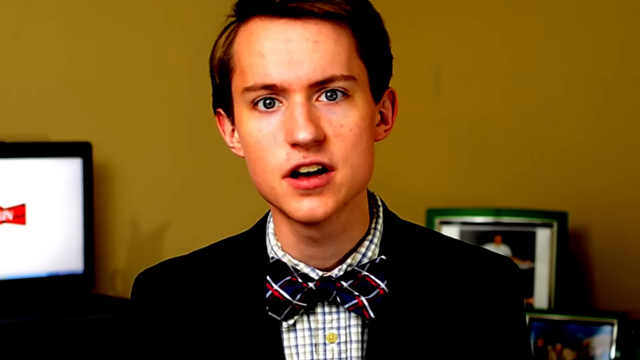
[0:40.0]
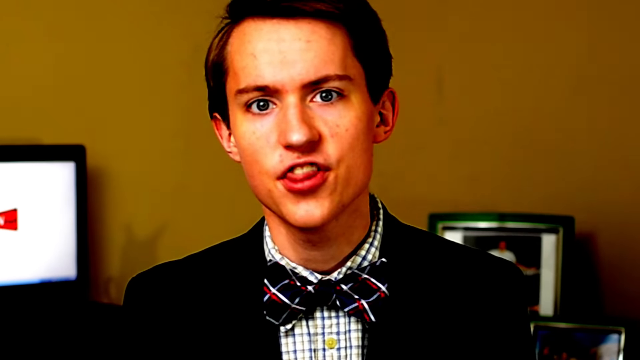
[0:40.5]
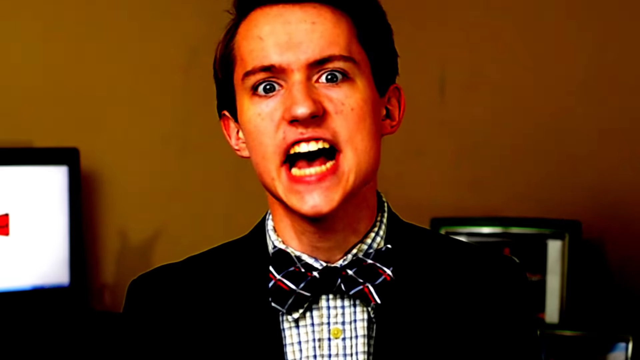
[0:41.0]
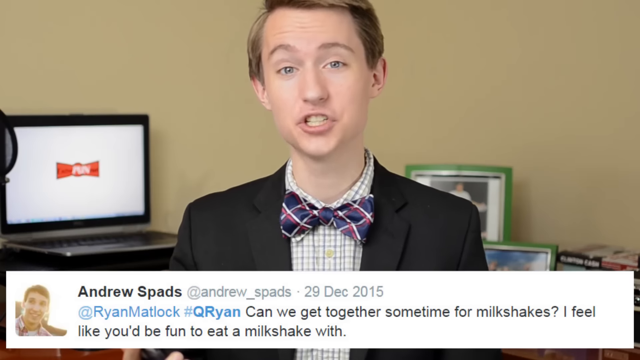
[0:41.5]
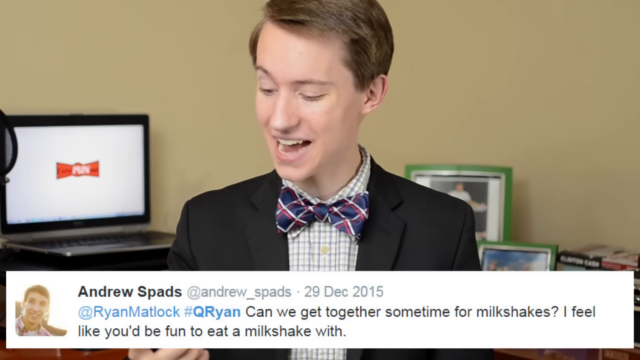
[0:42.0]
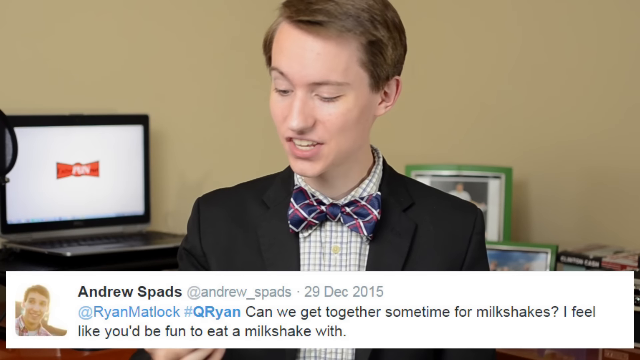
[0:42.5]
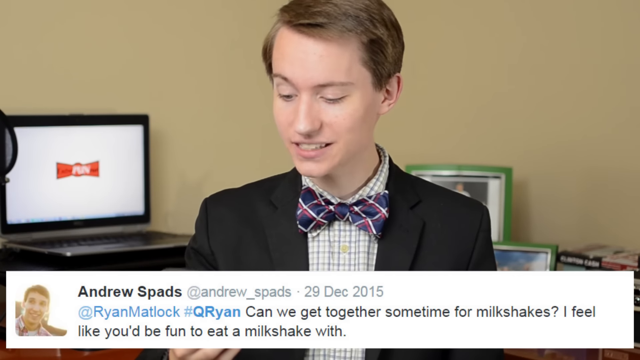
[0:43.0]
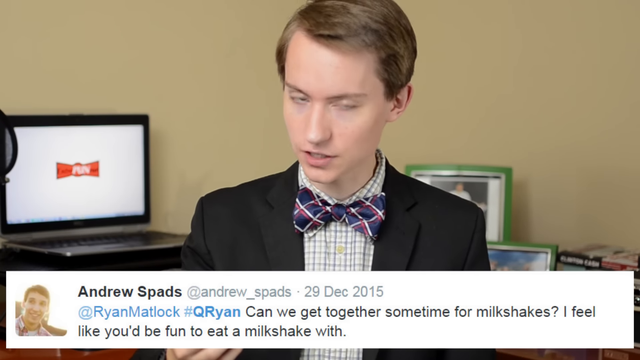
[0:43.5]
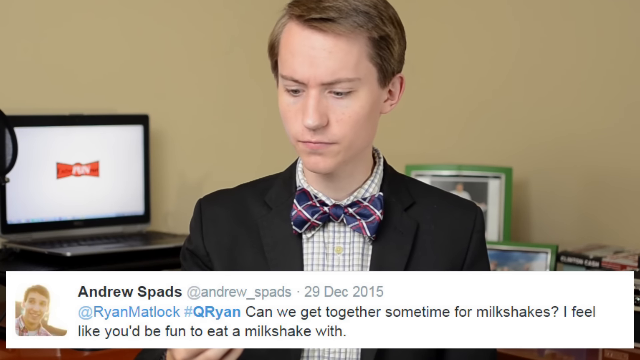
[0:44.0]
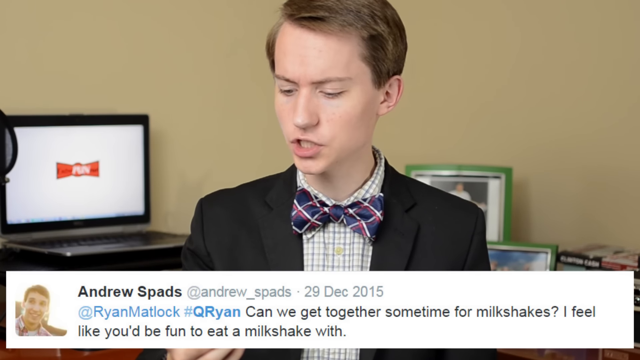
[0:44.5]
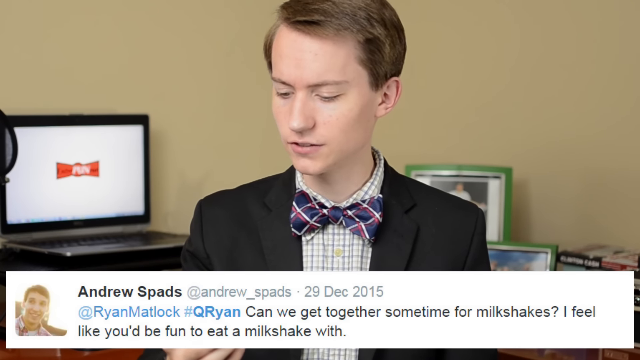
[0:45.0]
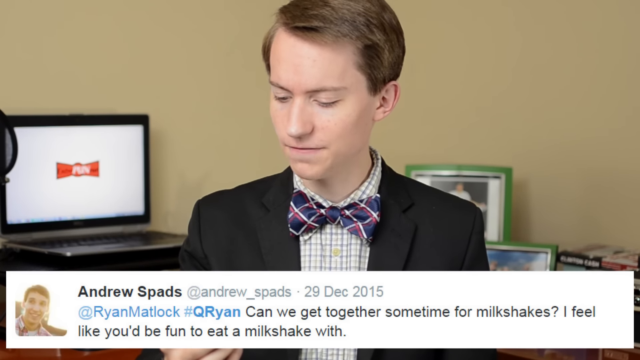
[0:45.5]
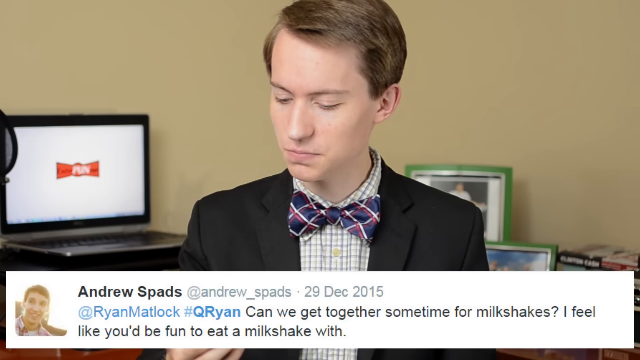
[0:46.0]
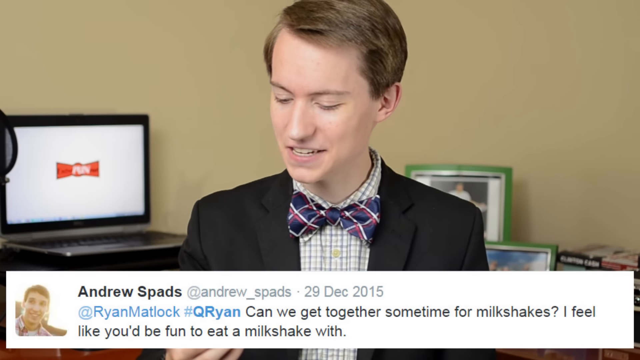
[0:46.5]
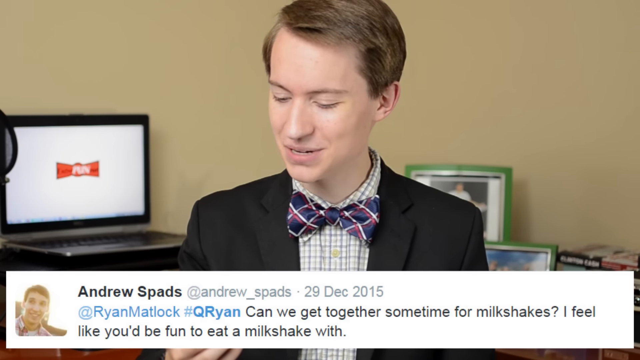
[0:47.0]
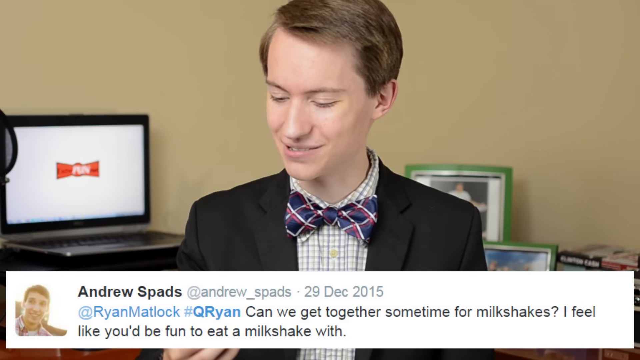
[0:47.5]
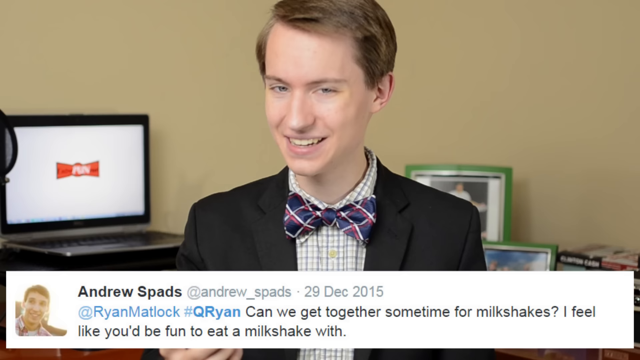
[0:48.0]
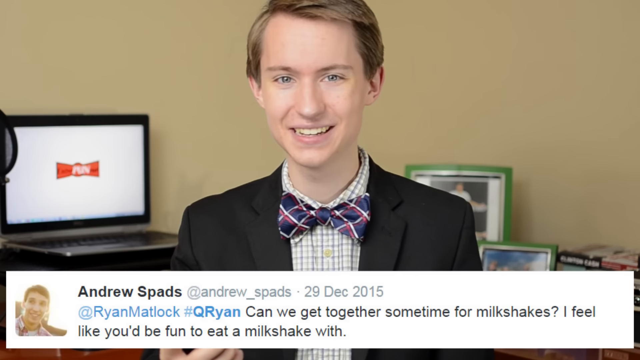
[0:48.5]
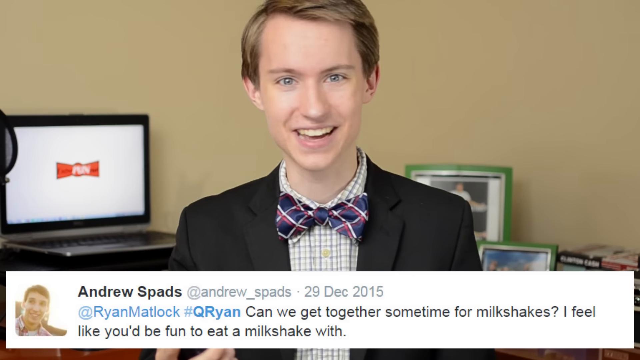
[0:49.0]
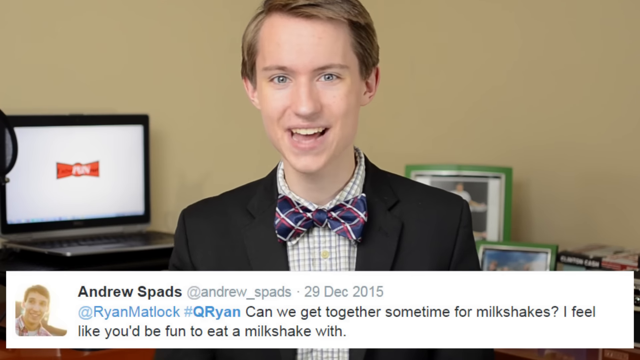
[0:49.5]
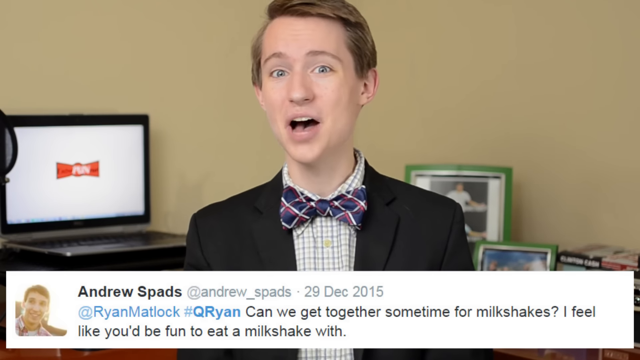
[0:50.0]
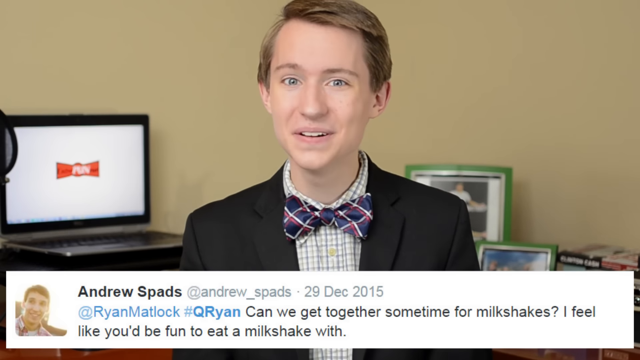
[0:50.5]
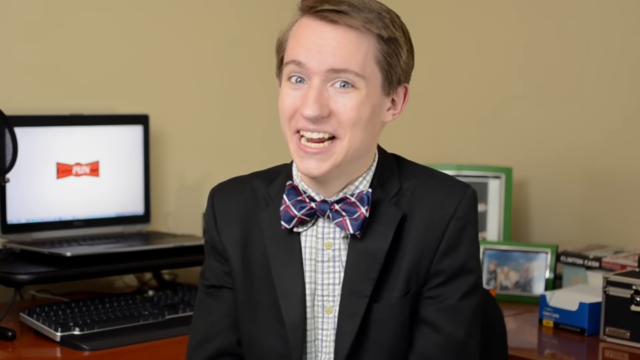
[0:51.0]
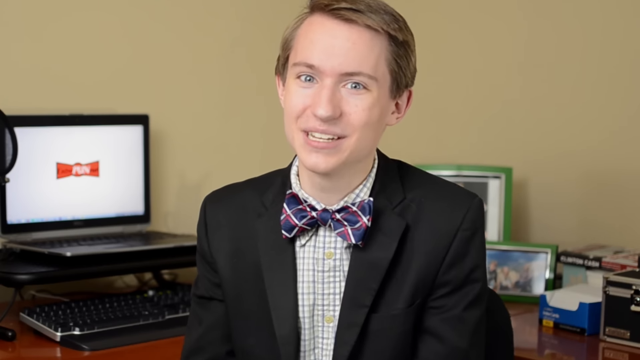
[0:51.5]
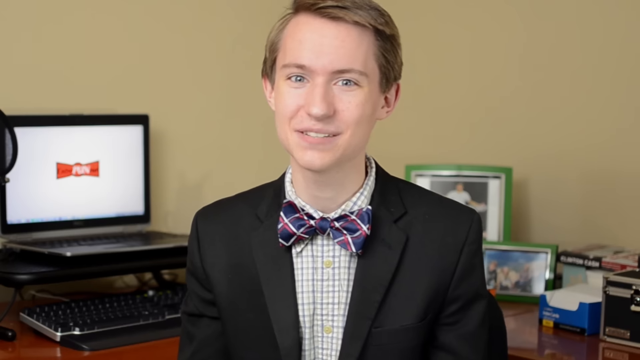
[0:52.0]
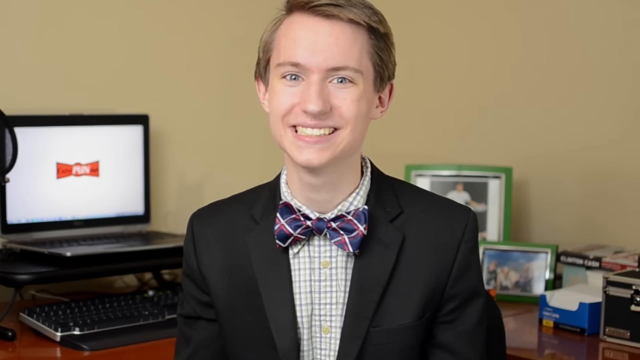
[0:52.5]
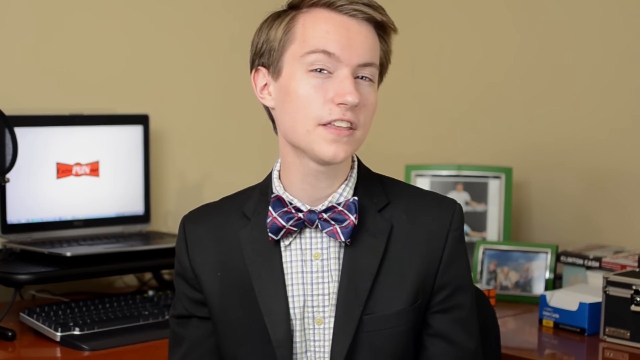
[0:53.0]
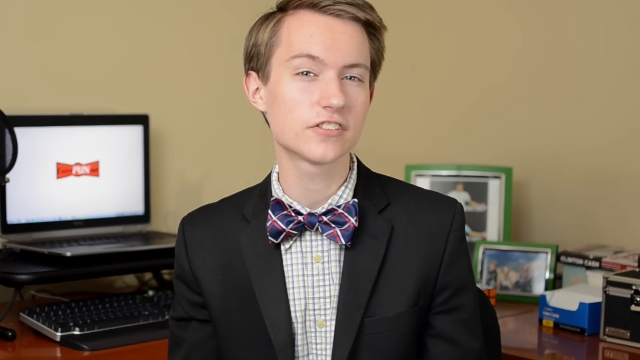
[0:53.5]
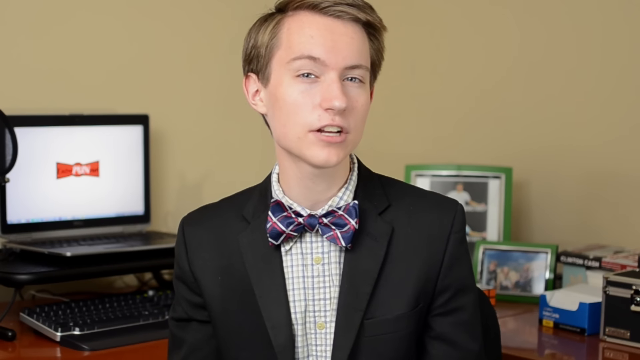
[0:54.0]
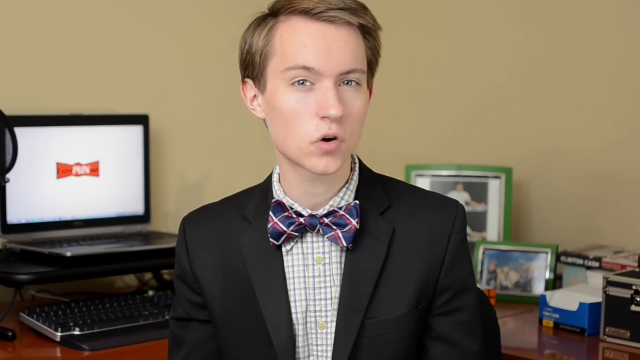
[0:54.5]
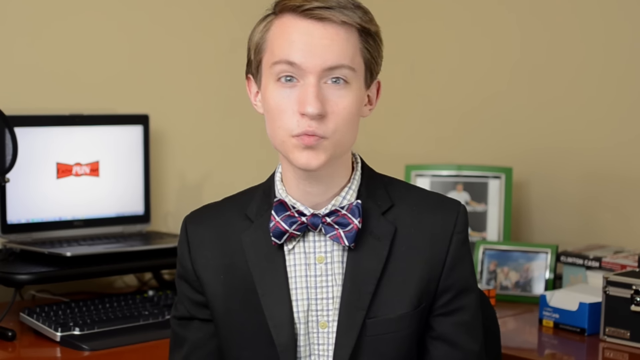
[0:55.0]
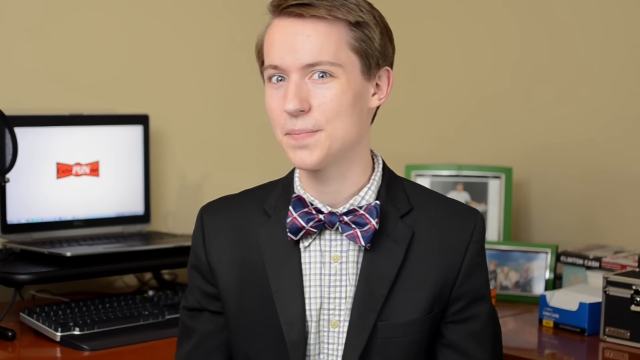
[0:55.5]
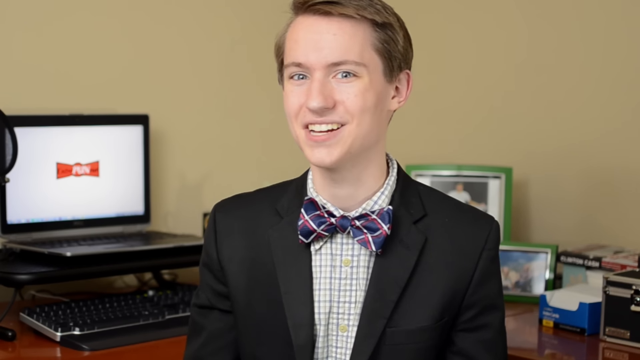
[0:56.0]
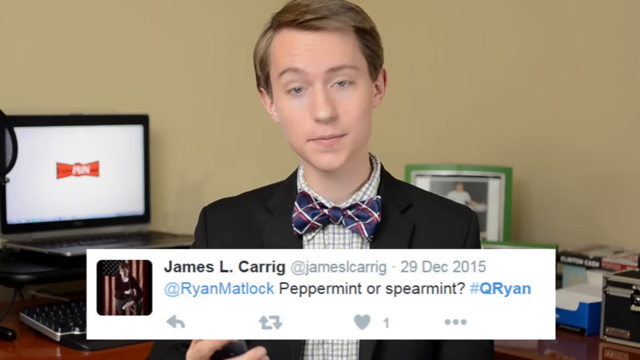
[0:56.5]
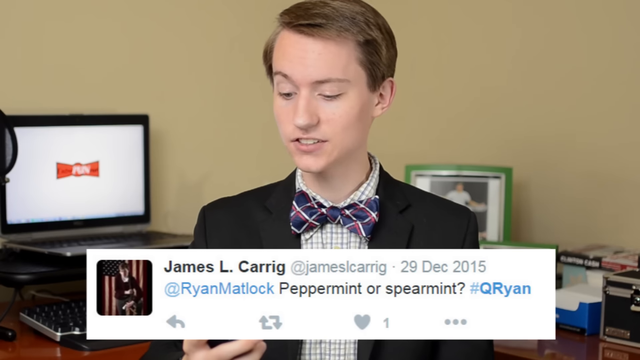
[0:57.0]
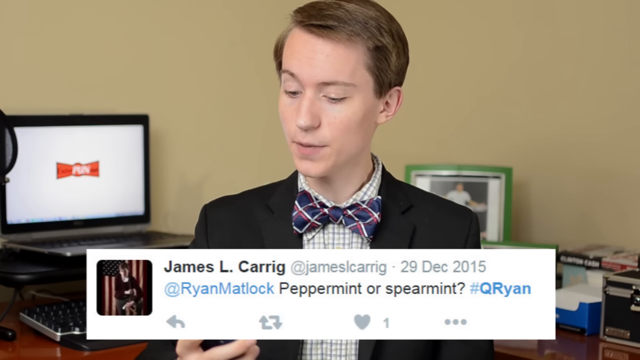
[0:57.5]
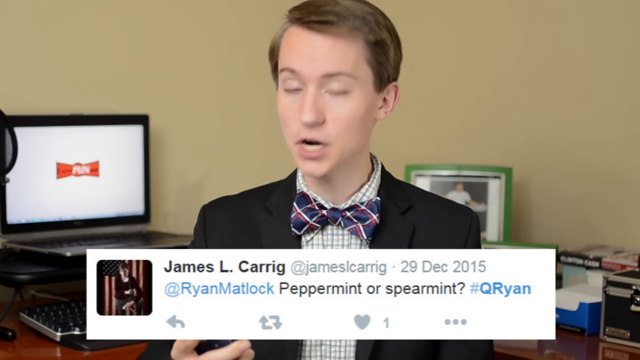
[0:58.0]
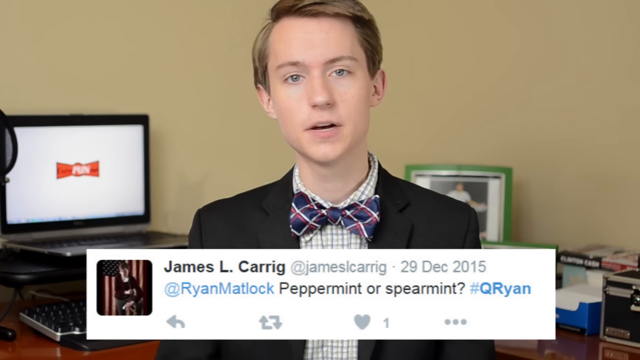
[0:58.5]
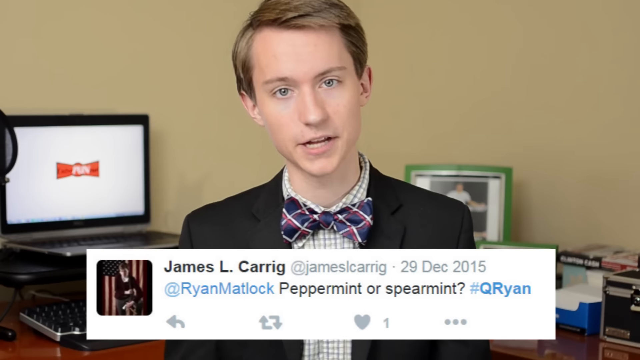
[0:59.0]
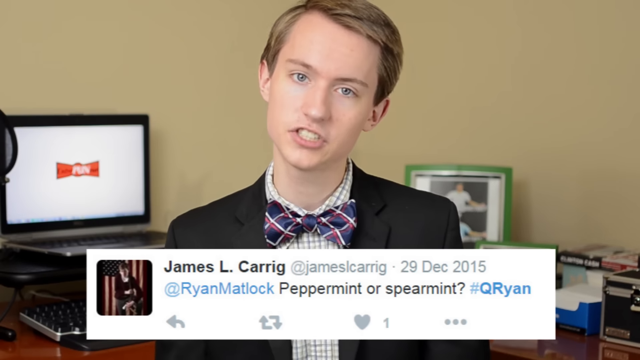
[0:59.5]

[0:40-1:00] In the same bedroom-like setting, the camera is zoomed in on the young man's face. He has a white skin tone, an early-20s look, and short brown hair combed to the side, and wears a black jacket, a bow tie and a dress shirt. The image has a very contrasty, darkened look before returning to its original look. A tweet appears at the bottom from Andrew Spads, asking "can we get together sometime for milkshakes? I feel like it'd be fun to eat a milkshake with", with a small profile icon to the left of the tweet. The man looks down reading it, holding his phone in his right hand and smiling very widely, then kind of squints. Another tweet appears at the bottom from James L. Carrig, addressed to @Ryan Matlock, asking "peppermint or spearmint", with a small profile icon to the left of the name and question.